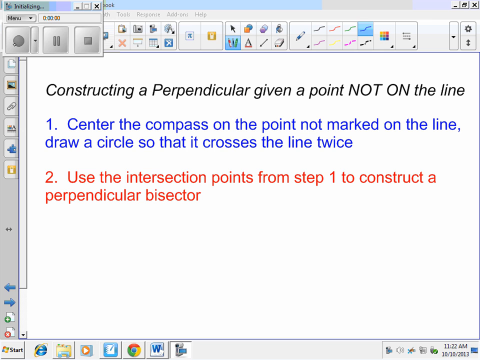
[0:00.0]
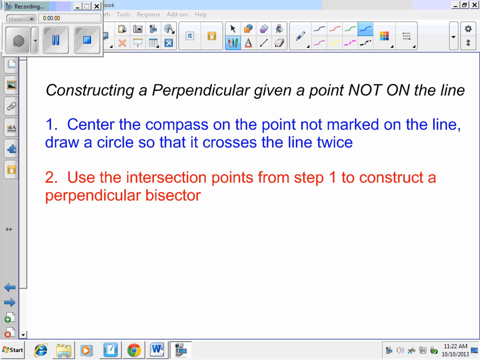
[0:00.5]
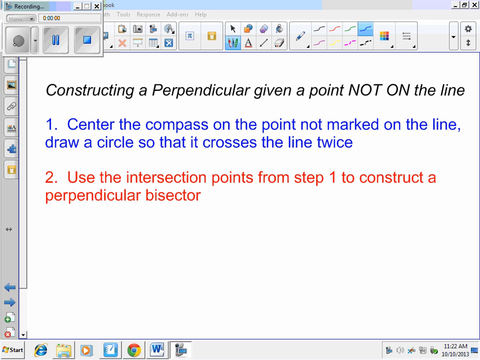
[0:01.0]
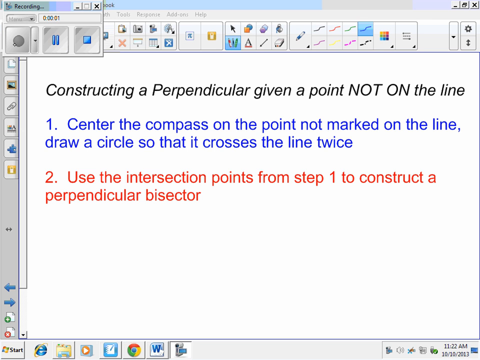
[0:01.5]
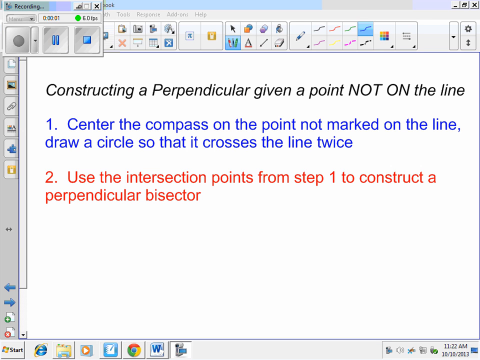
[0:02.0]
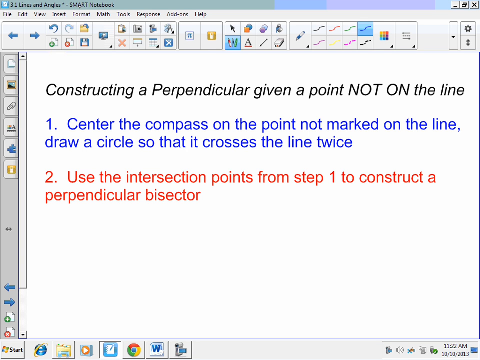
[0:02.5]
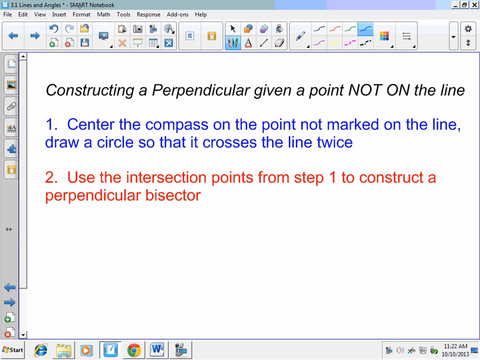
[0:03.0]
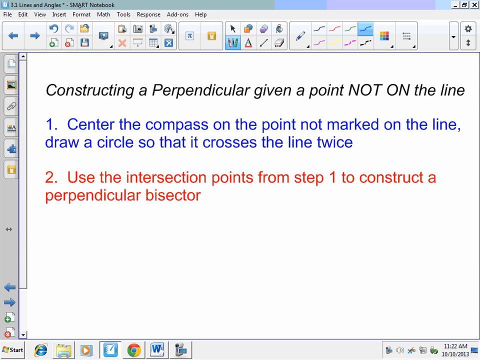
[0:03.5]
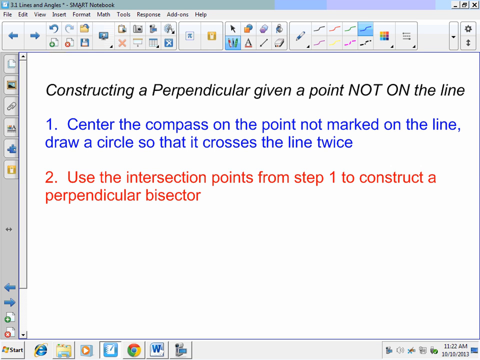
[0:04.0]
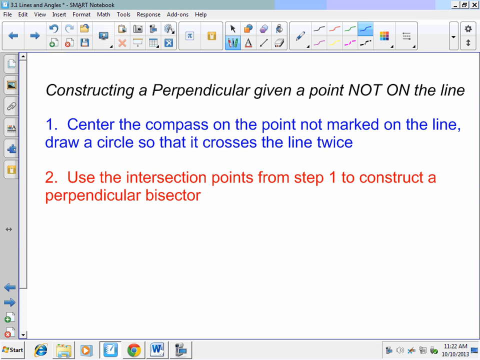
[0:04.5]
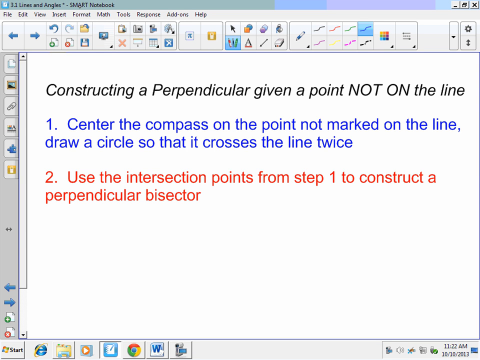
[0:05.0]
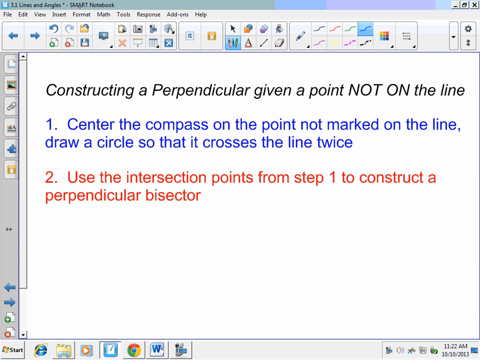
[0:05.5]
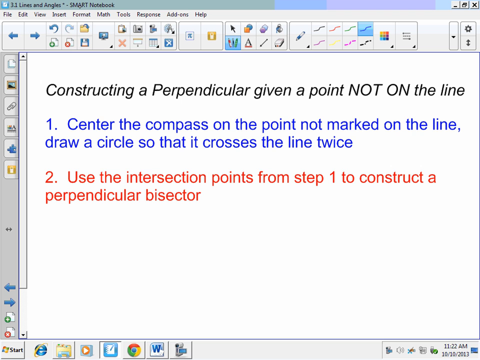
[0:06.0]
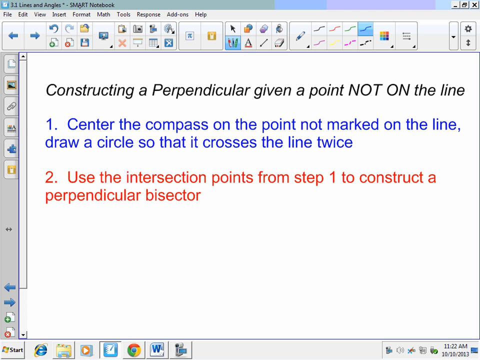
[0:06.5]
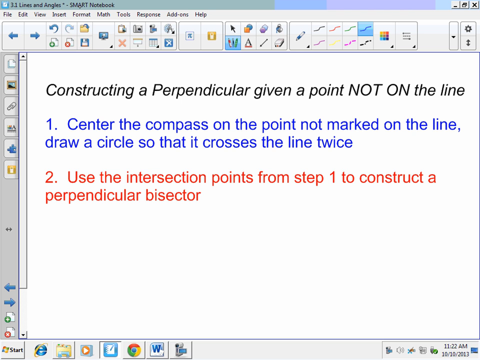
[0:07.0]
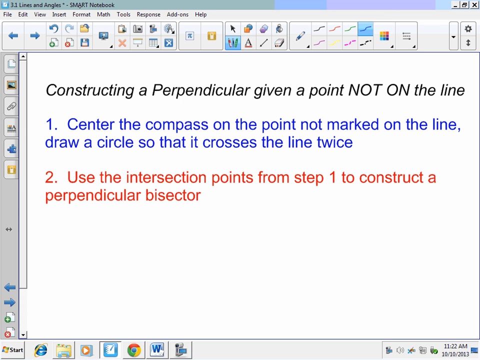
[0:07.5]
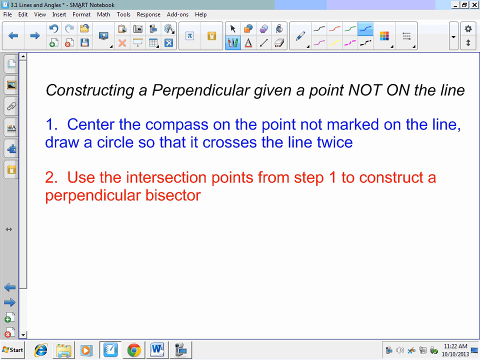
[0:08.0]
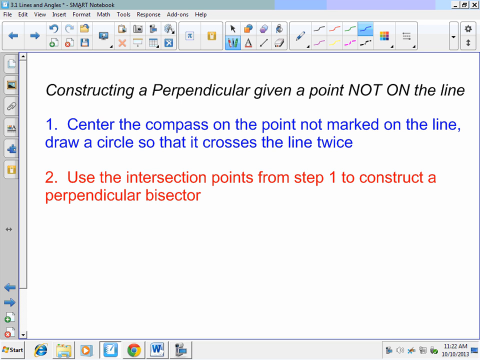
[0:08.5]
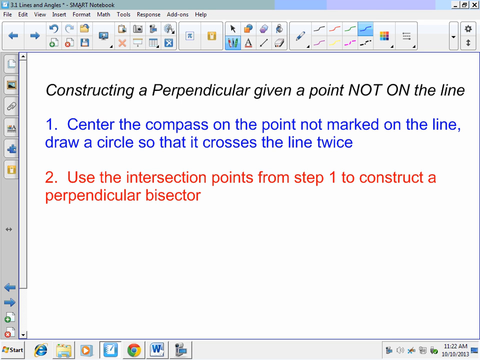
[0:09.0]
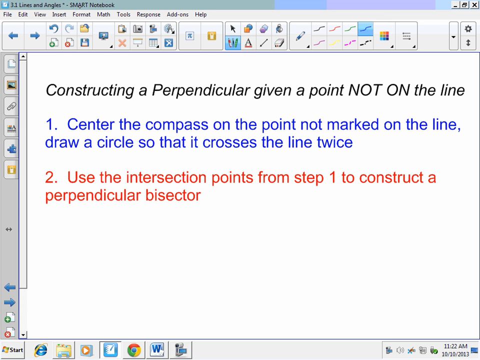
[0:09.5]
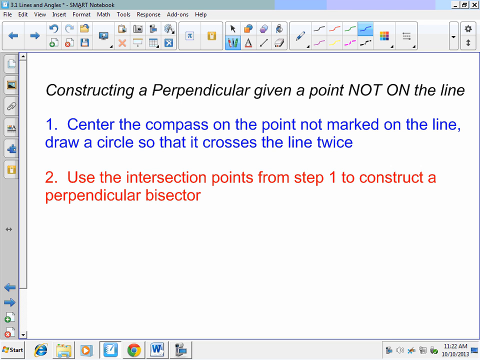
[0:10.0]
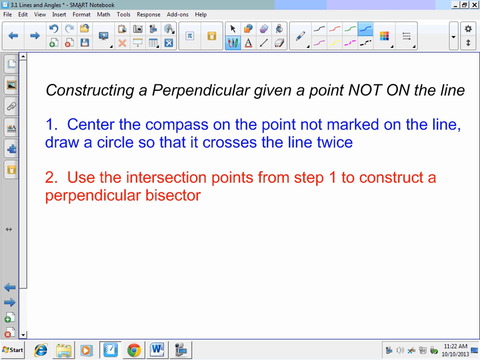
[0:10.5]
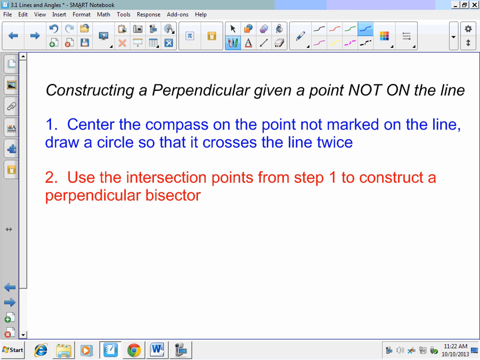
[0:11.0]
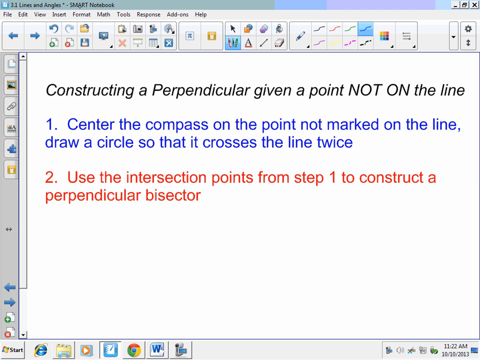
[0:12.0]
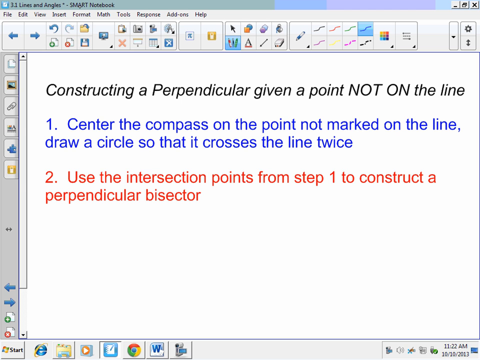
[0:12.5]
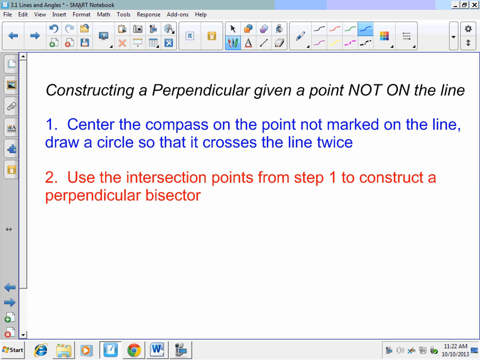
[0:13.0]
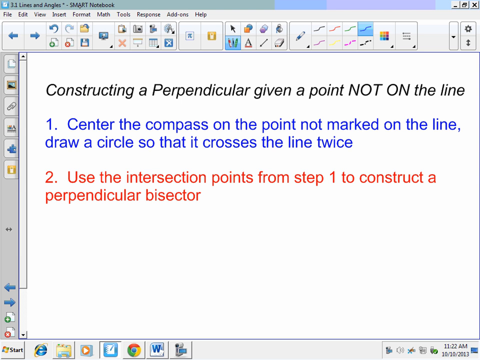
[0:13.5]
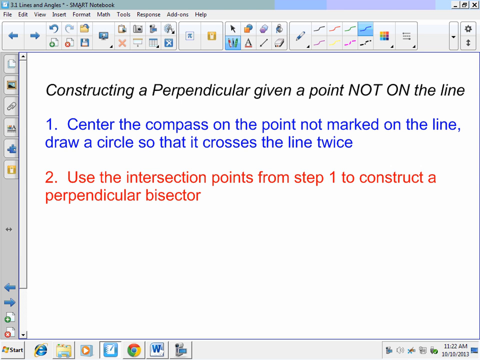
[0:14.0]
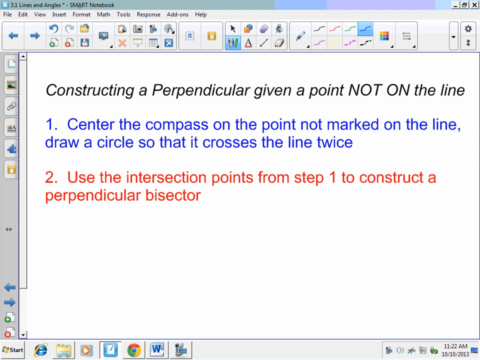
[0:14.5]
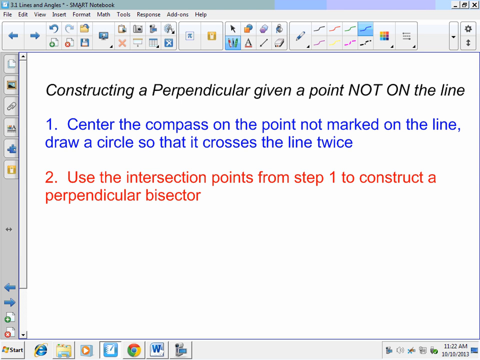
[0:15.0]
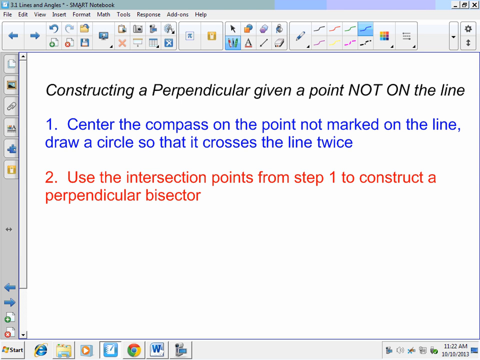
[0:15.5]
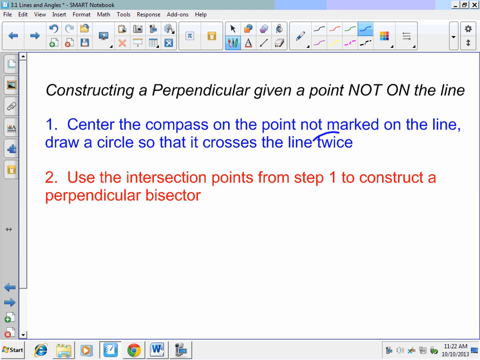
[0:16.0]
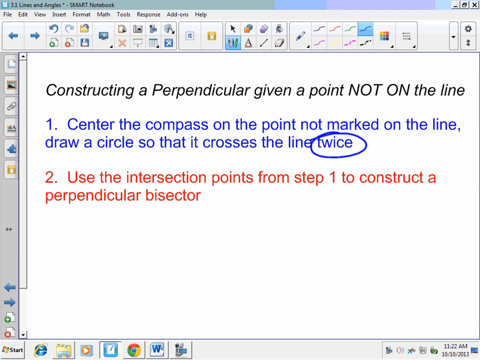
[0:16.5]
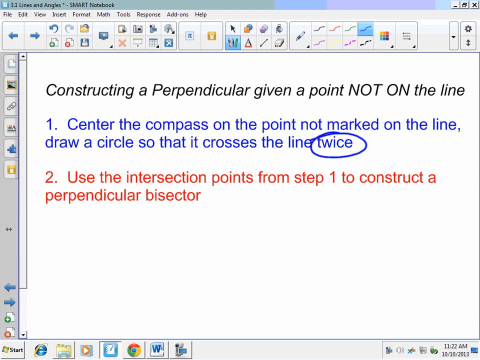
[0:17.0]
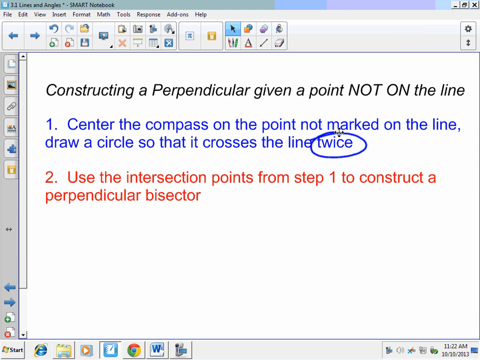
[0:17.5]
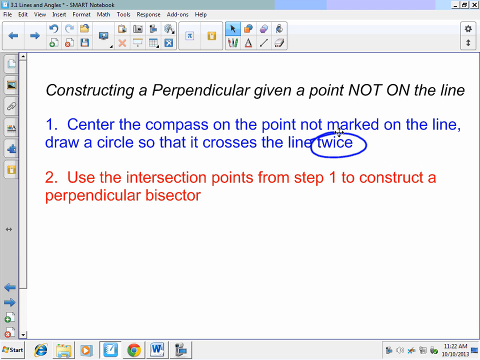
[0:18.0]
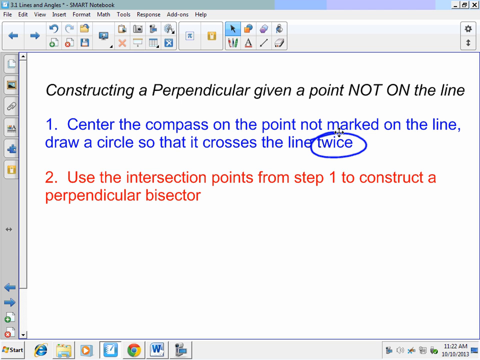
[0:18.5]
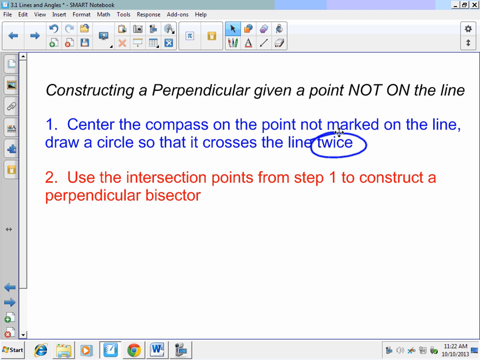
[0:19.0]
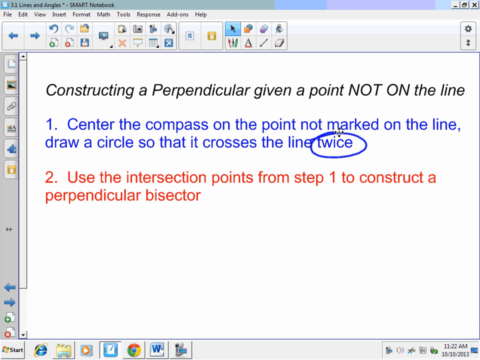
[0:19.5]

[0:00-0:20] The screen is being shared, and text is on the screen; it looks like a notepad is open. At the start, the screen-sharing recording is visible and an icon is selected. The text is about constructing a perpendicular given a point not on the line, with the words "not on" capitalized, probably for emphasis. Two different points, or tricks, are listed in two different colors: one blue and one red. The screen then stays unchanged for a while. Then, with the pen icon selected earlier, a word is circled twice, presumably to signal its importance. The recording tab remains visible.